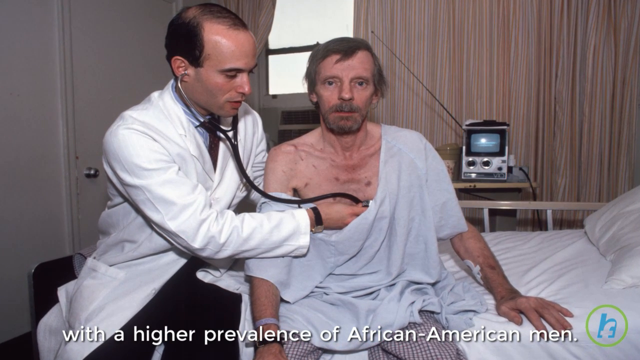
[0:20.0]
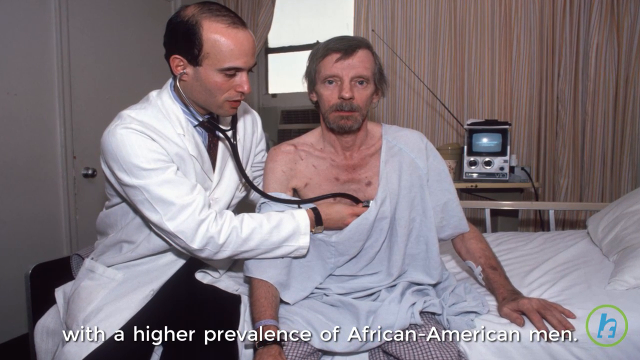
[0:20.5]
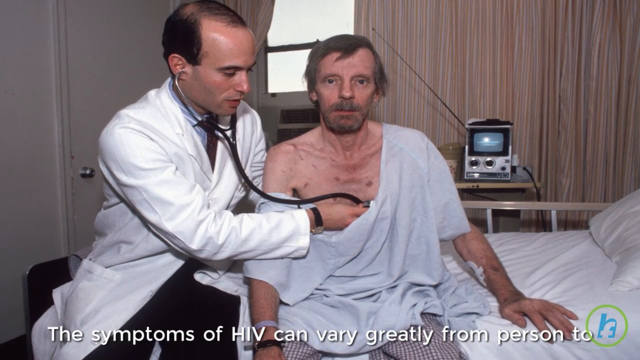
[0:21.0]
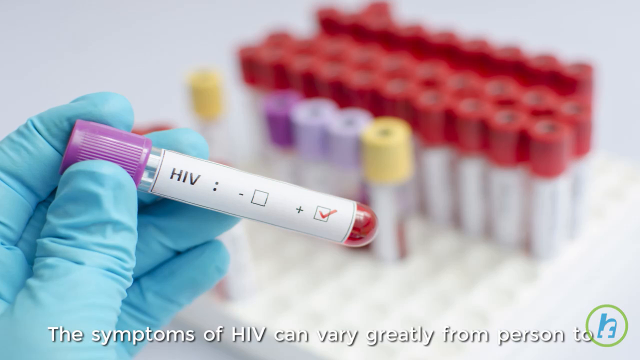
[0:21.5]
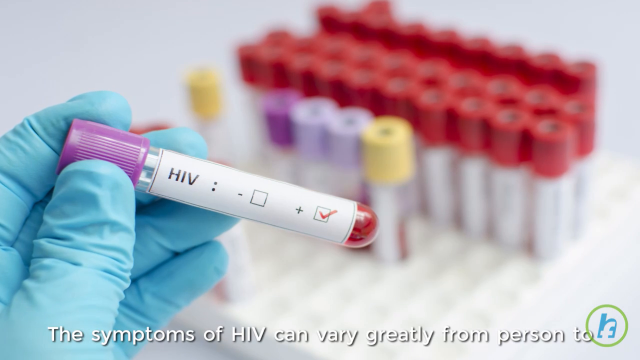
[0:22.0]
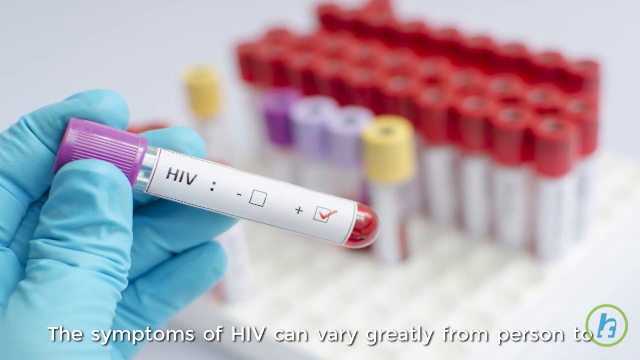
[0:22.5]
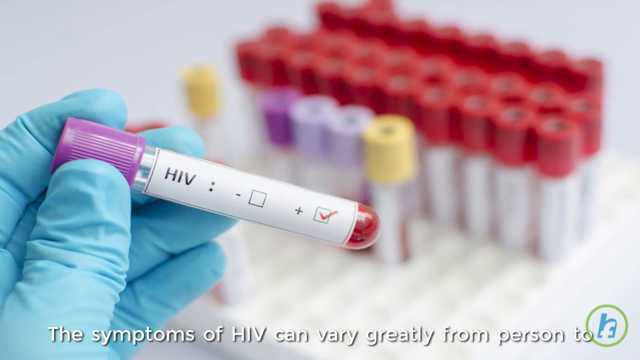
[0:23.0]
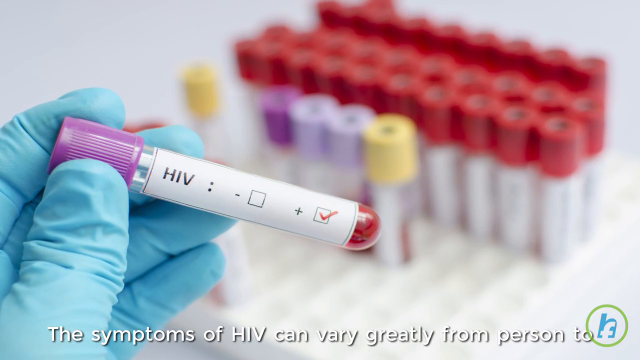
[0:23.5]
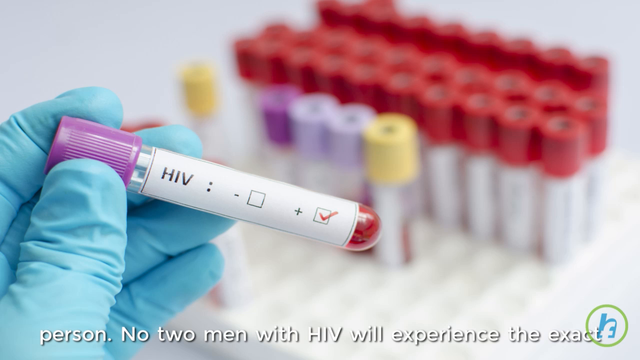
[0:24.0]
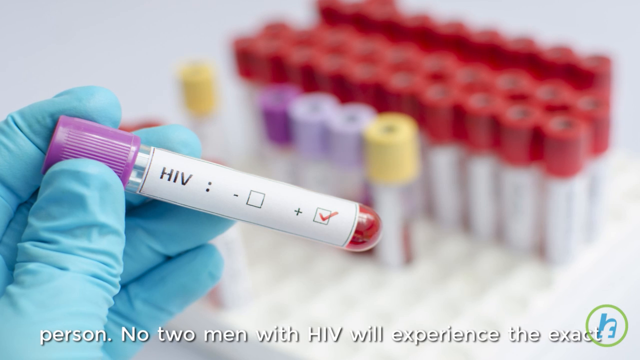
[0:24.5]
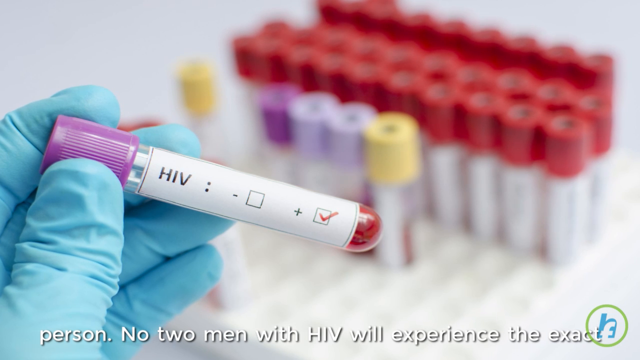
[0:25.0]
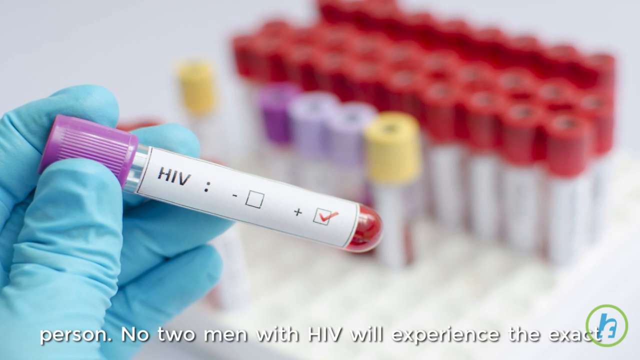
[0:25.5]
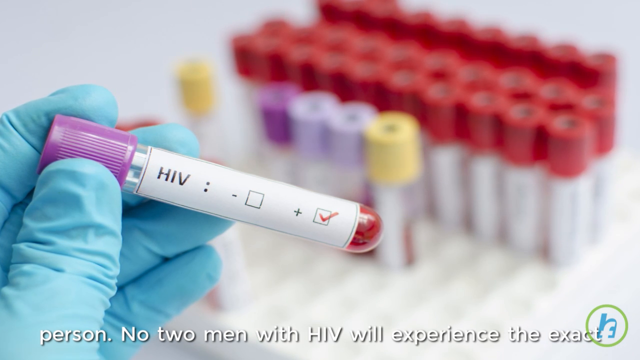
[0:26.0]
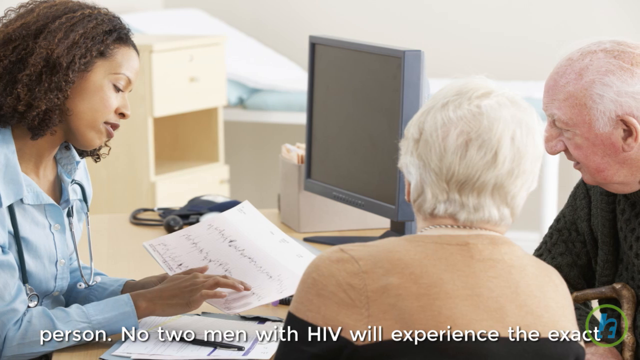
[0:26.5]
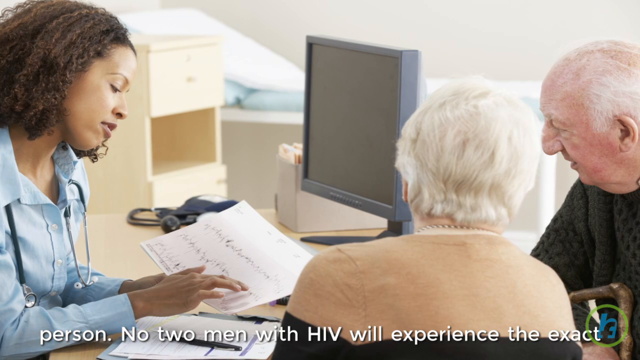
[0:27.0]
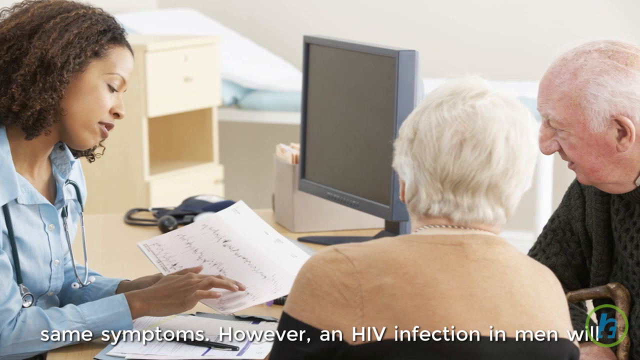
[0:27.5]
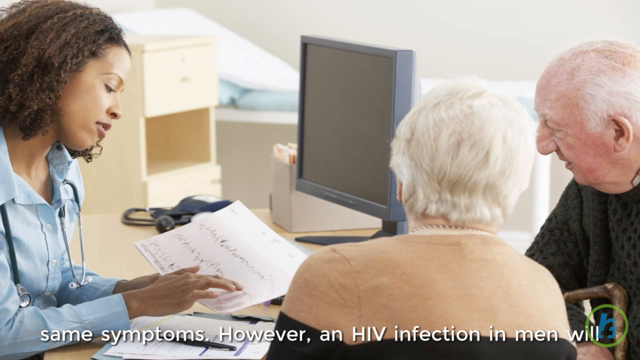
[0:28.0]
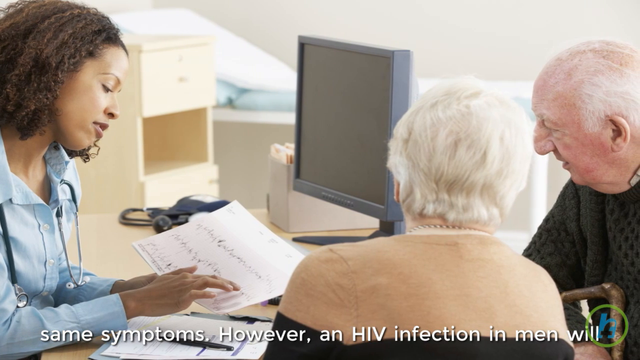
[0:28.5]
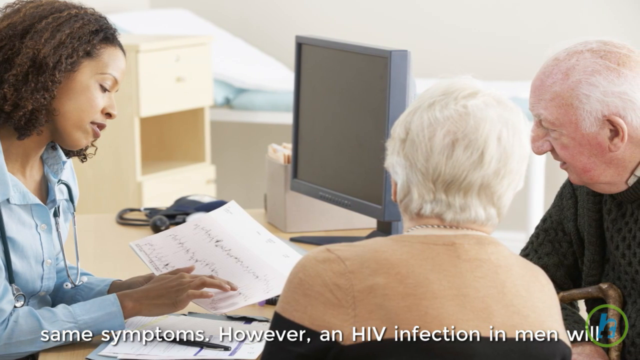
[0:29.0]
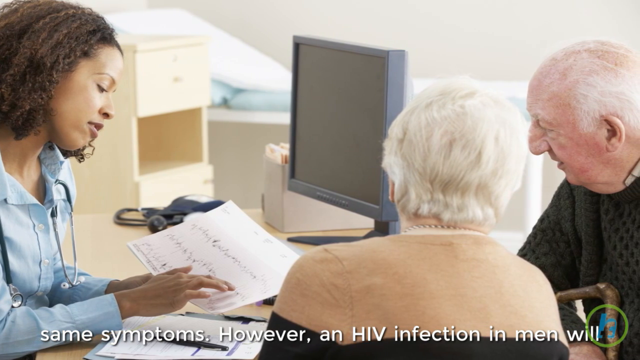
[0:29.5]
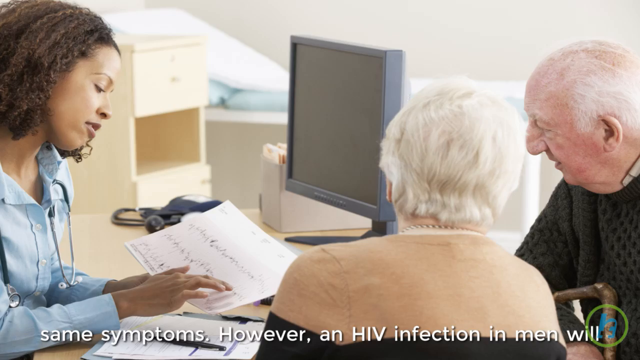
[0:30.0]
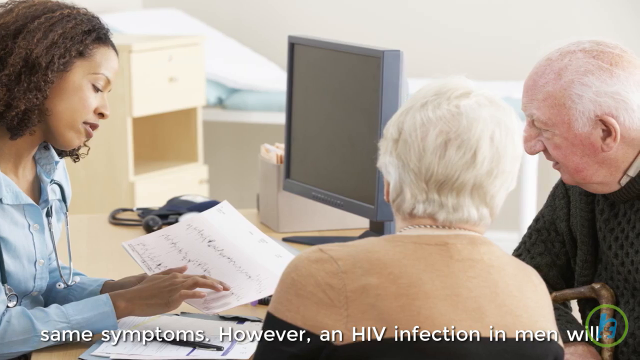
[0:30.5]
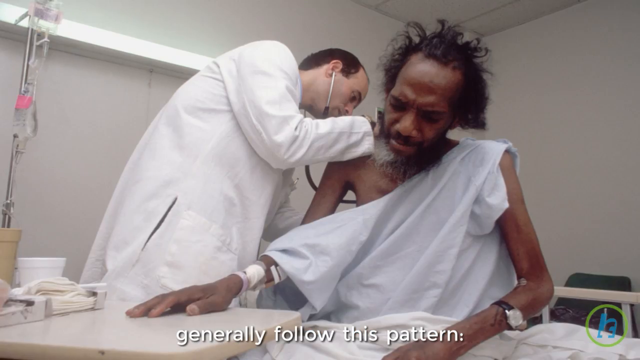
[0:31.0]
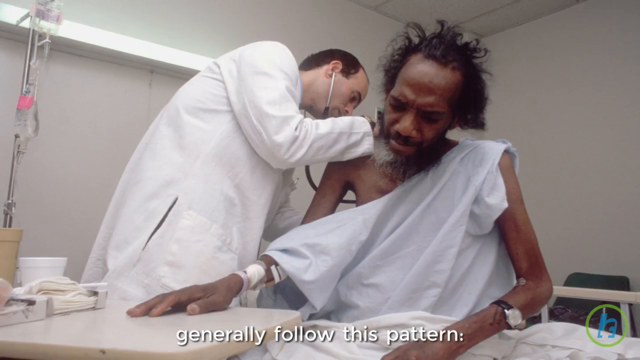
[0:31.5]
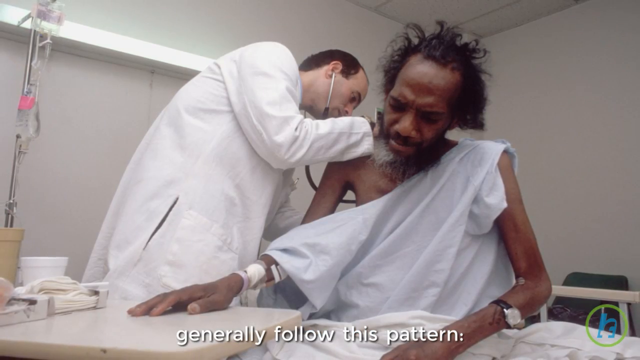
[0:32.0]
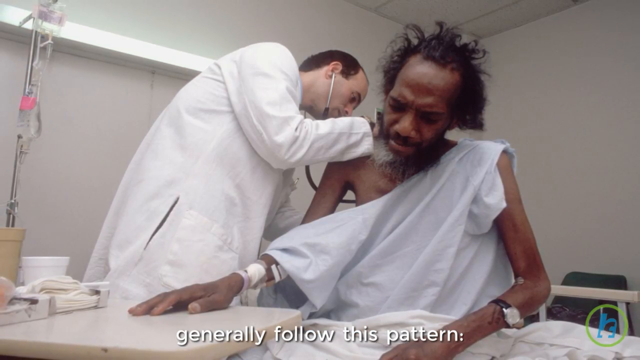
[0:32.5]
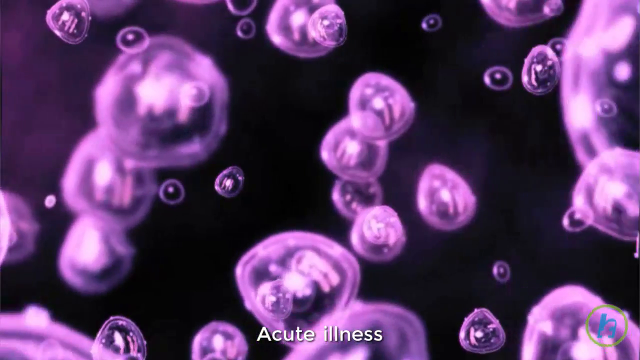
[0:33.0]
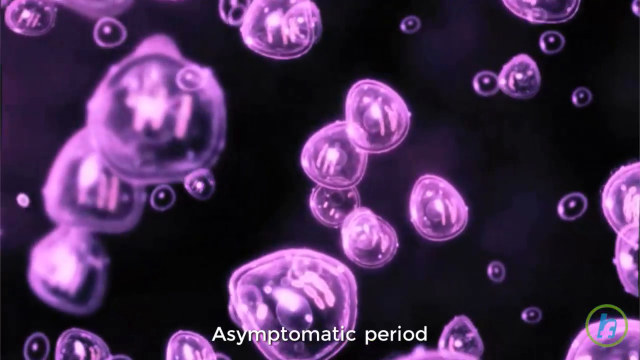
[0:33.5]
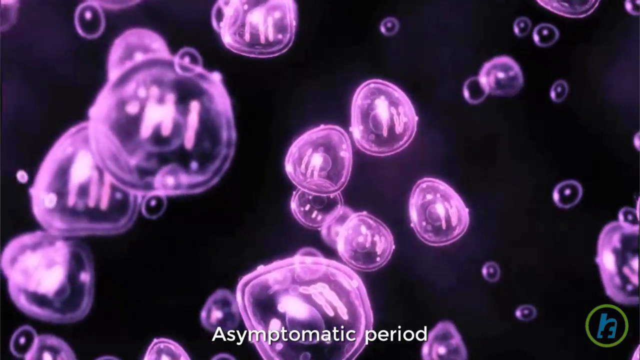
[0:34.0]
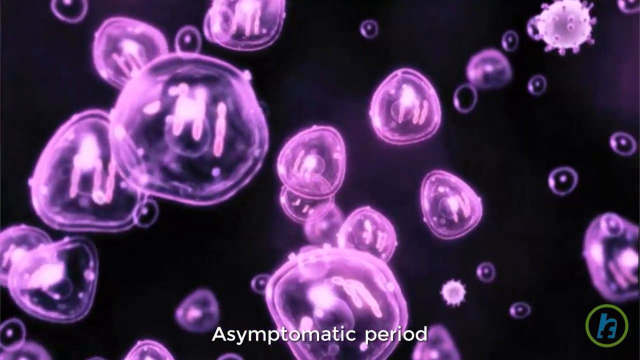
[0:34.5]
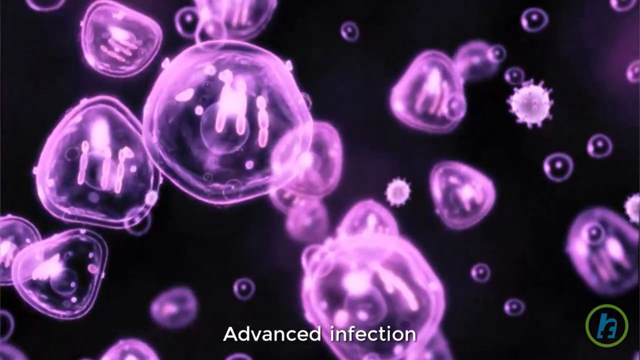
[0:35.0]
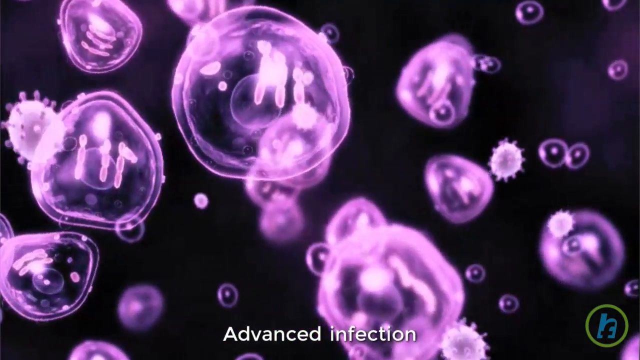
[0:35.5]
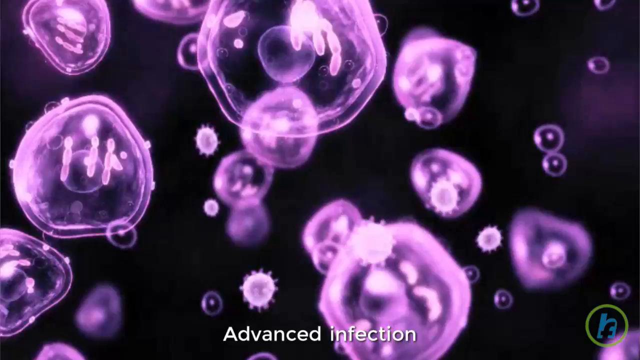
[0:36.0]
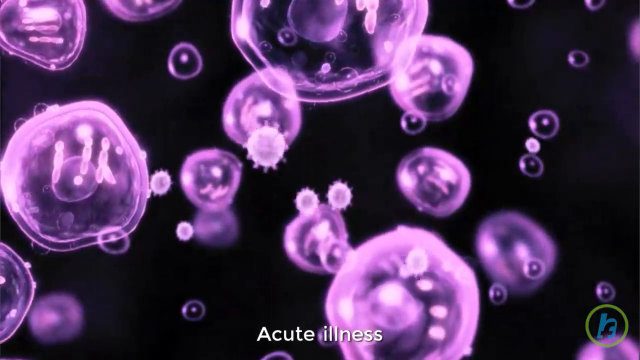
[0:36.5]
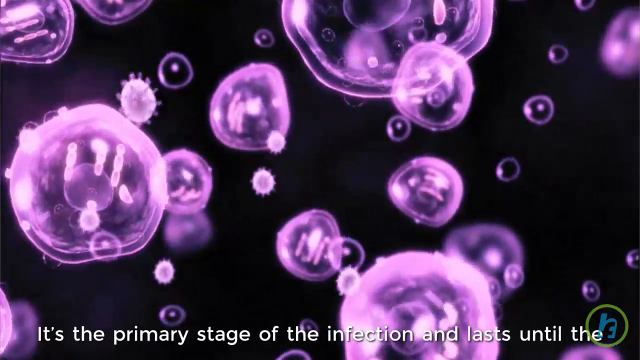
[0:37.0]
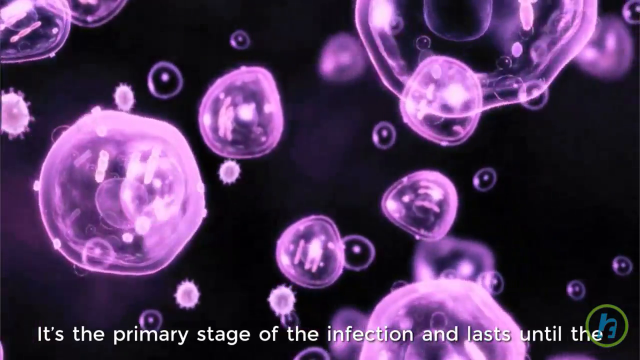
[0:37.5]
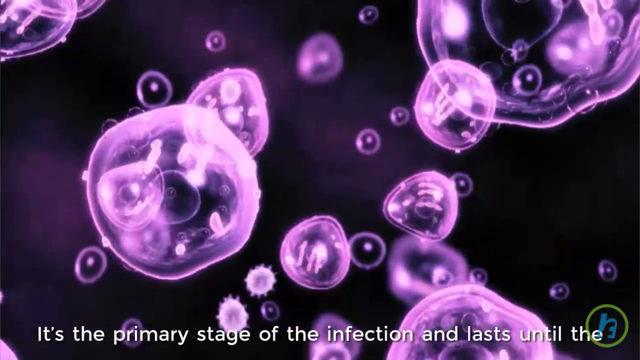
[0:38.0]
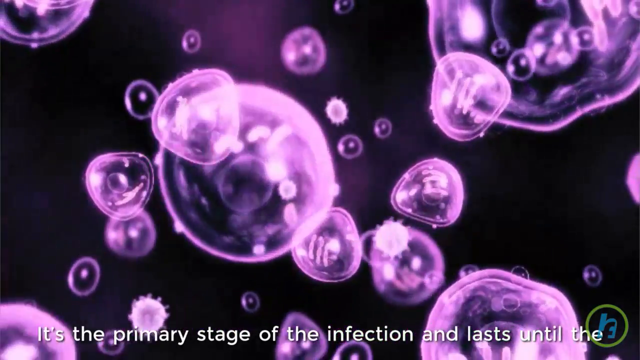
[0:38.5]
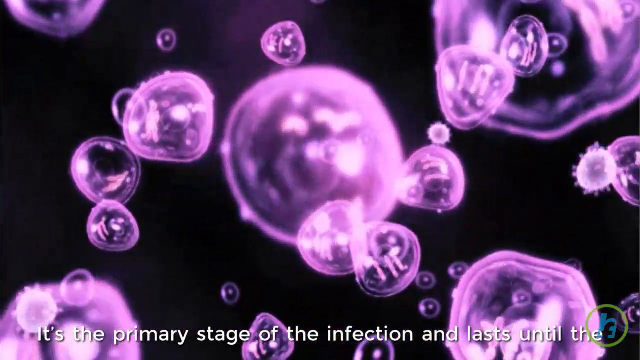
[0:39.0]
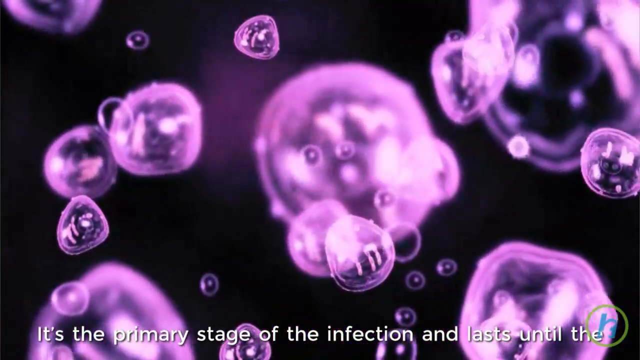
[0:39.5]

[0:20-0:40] Vials of blood are shown. In the bottom left corner is a blue rubber glove with fingers in it, and that person is holding a vial of blood with a purple lid. A white piece of paper going around the vial says "HIV". The camera kind of slowly pans in on it. The image then switches to one that appears to be in a doctor's office. A black woman who is the doctor has a stethoscope around her neck; her body faces the side of the camera so she is in profile, and her head is cocked to the left. Her right hand is on a piece of paper with her finger pointing. Seated next to her is an elderly couple, both looking down at the paper she is pointing at. It is a still photo; she is presumably explaining something on the paper to them. The room is well lit, and a computer monitor is visible next to them.